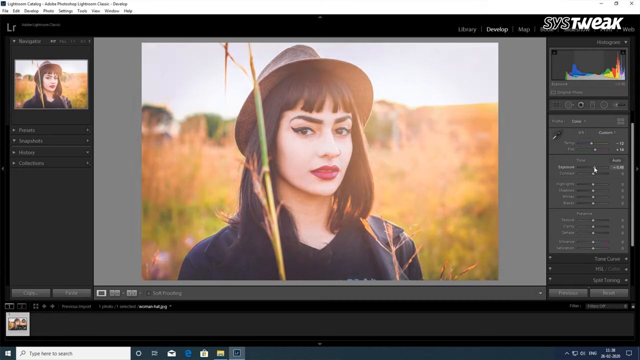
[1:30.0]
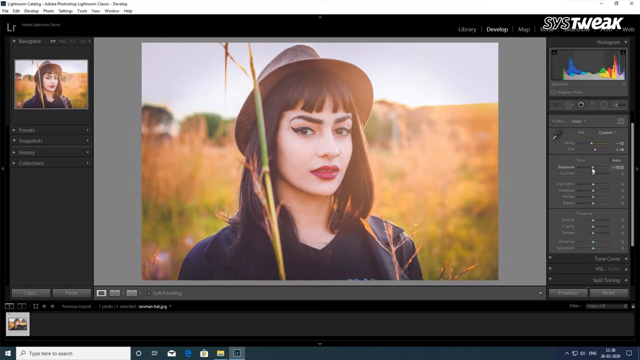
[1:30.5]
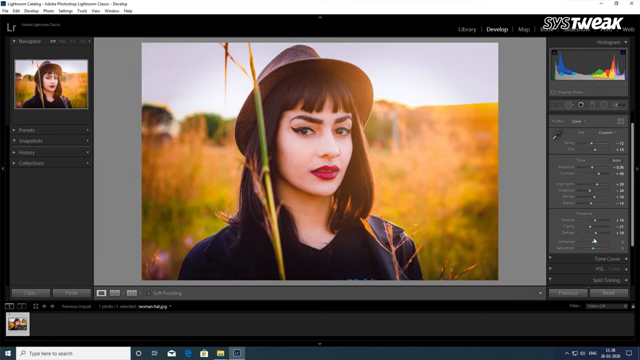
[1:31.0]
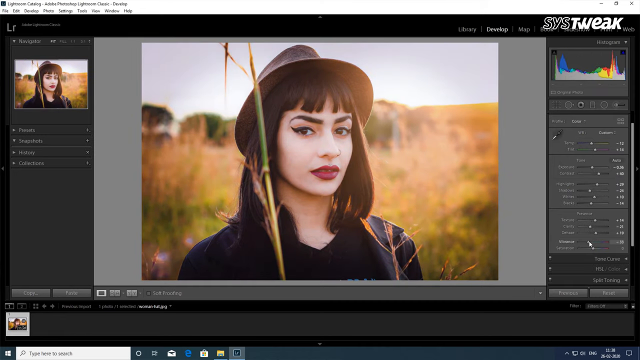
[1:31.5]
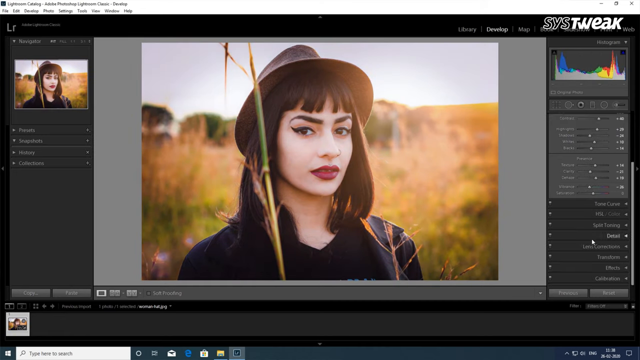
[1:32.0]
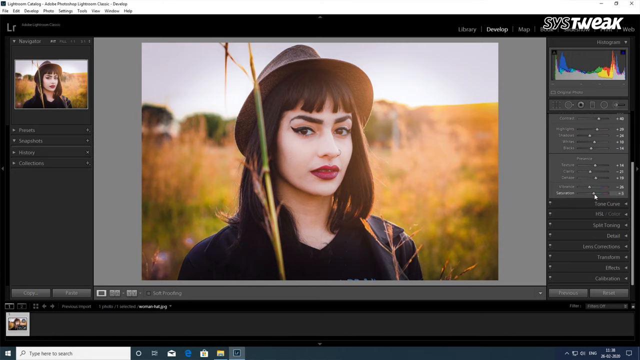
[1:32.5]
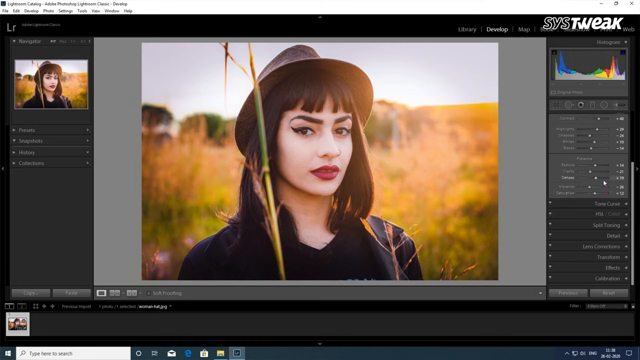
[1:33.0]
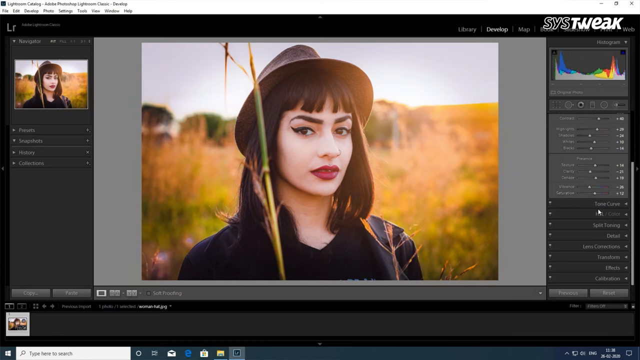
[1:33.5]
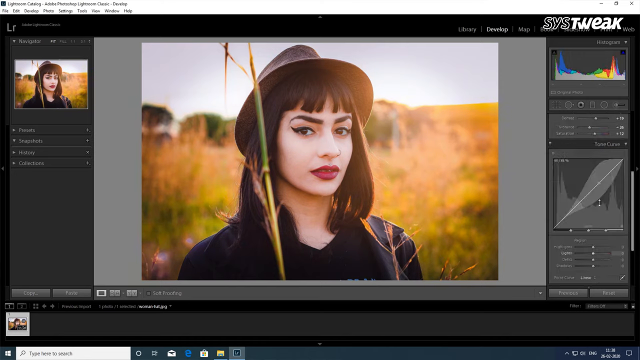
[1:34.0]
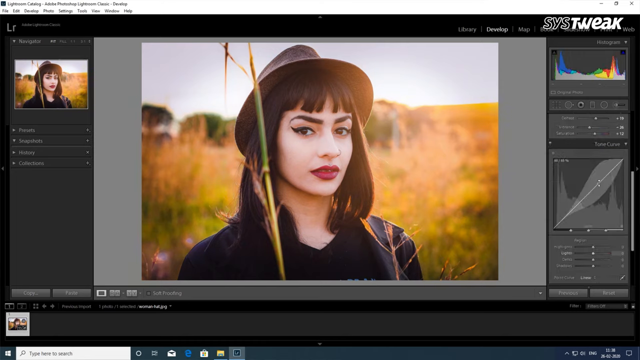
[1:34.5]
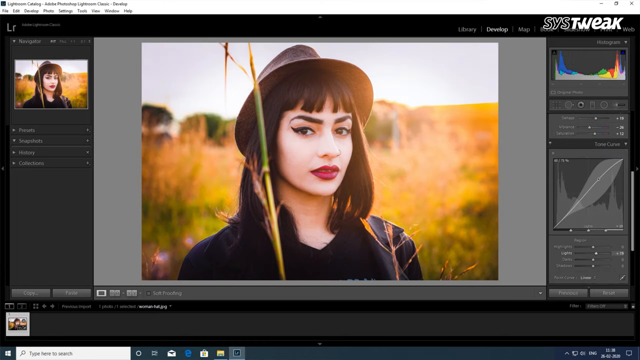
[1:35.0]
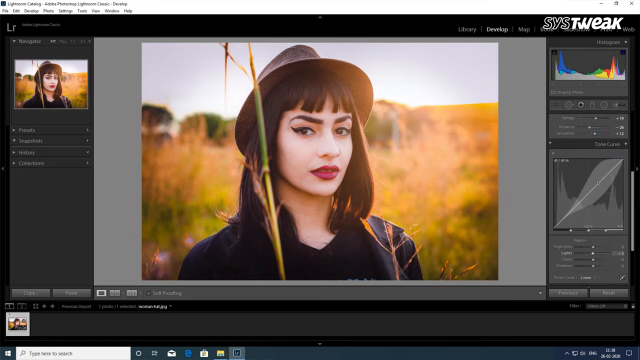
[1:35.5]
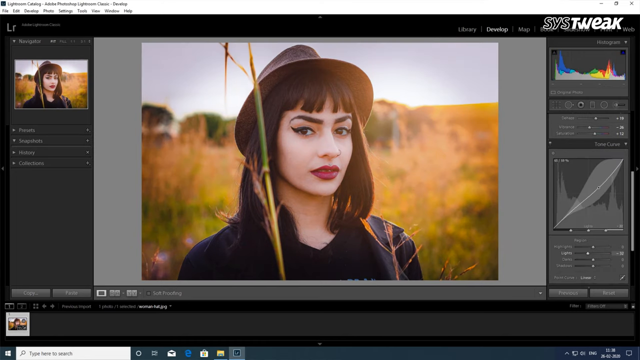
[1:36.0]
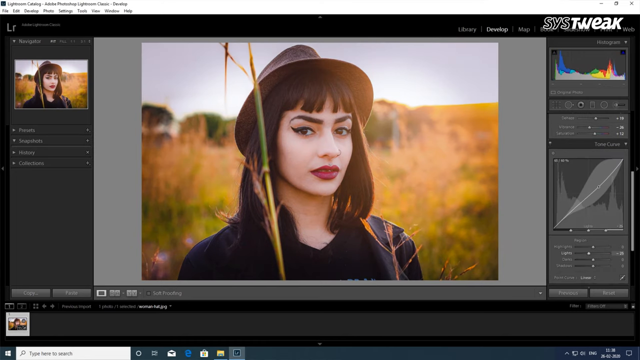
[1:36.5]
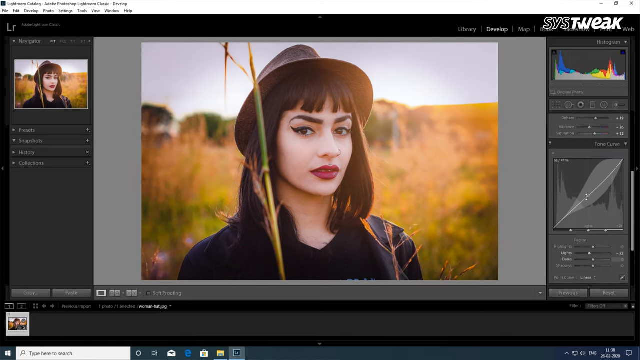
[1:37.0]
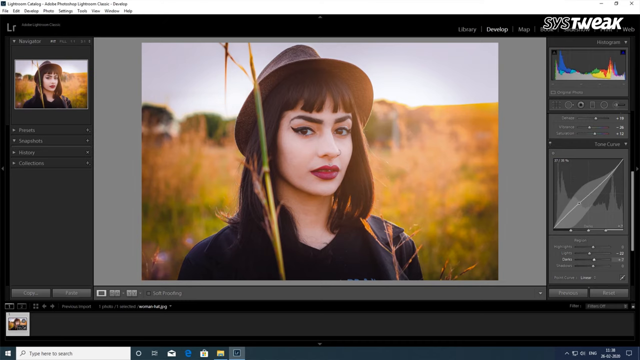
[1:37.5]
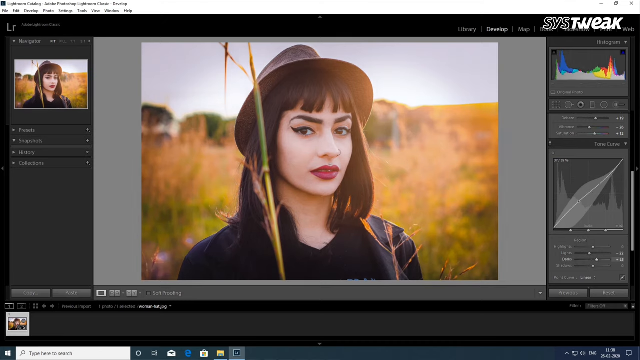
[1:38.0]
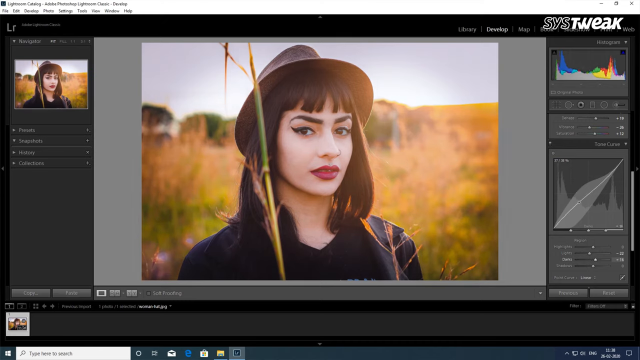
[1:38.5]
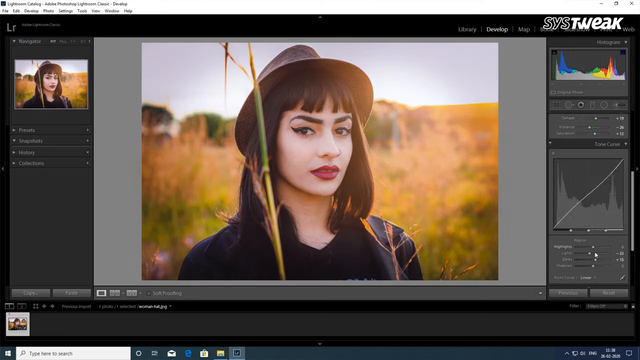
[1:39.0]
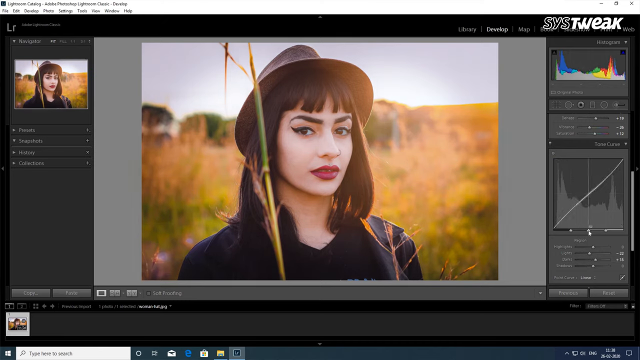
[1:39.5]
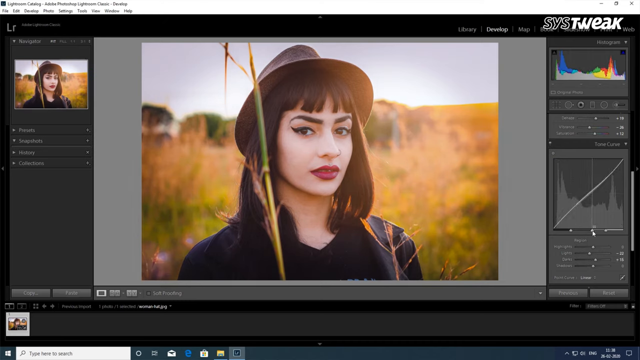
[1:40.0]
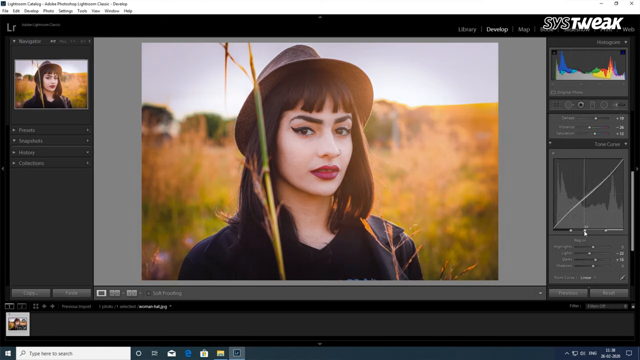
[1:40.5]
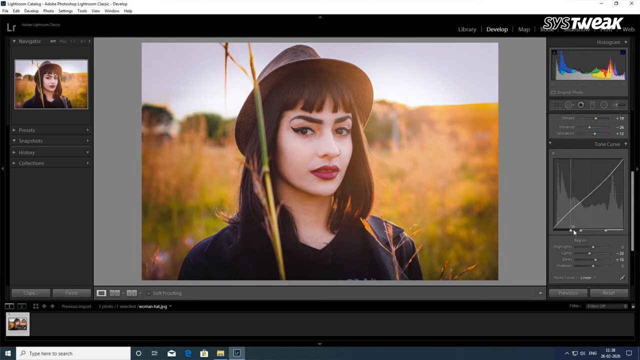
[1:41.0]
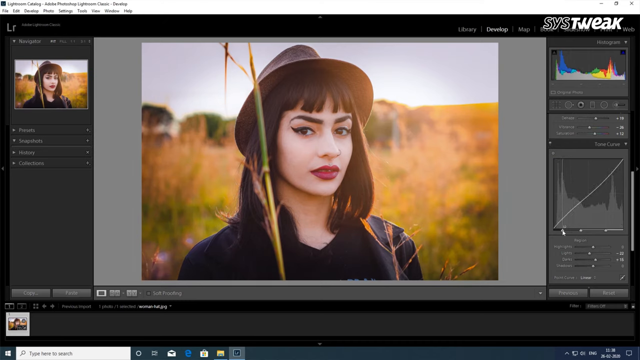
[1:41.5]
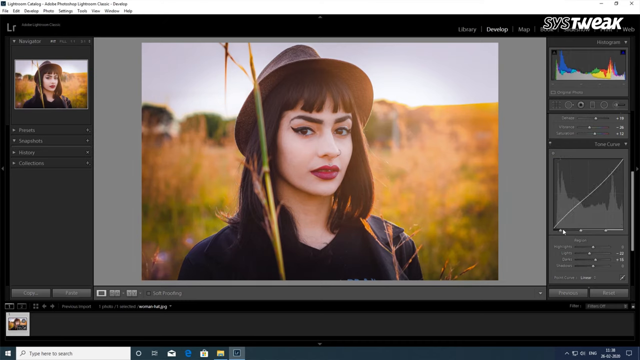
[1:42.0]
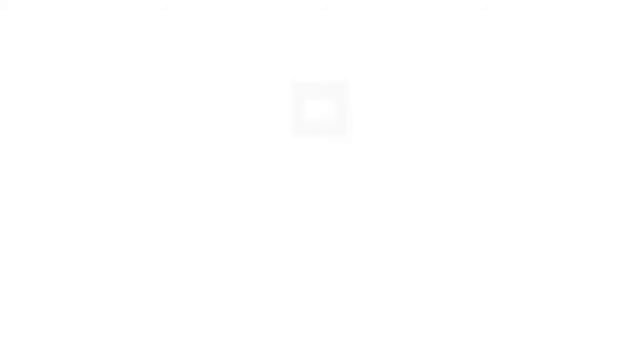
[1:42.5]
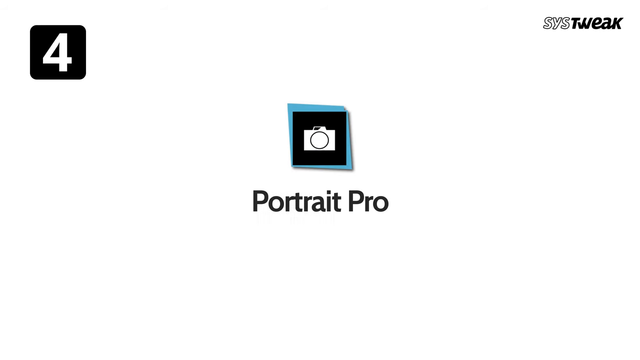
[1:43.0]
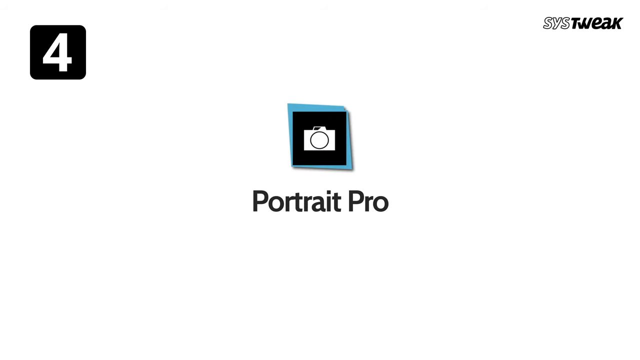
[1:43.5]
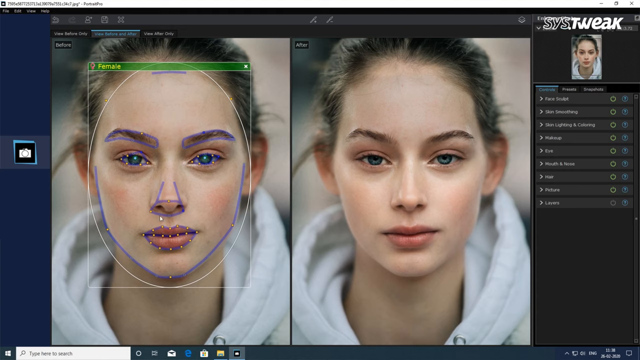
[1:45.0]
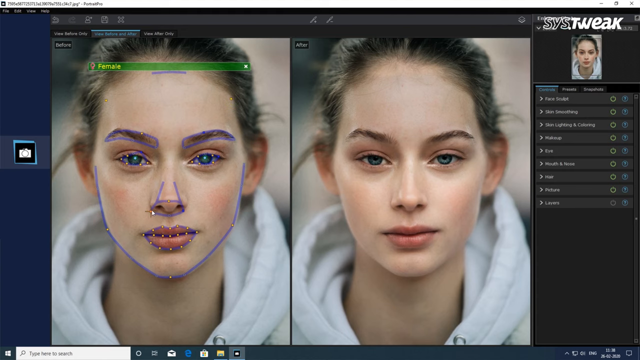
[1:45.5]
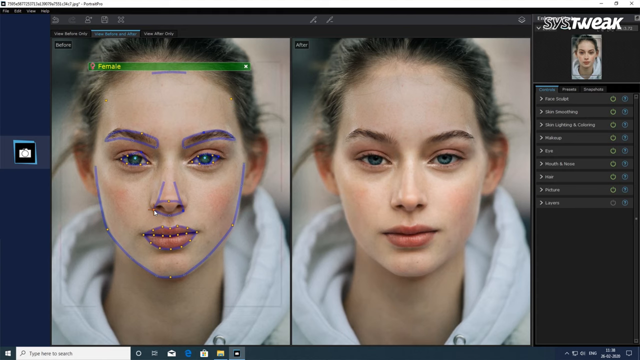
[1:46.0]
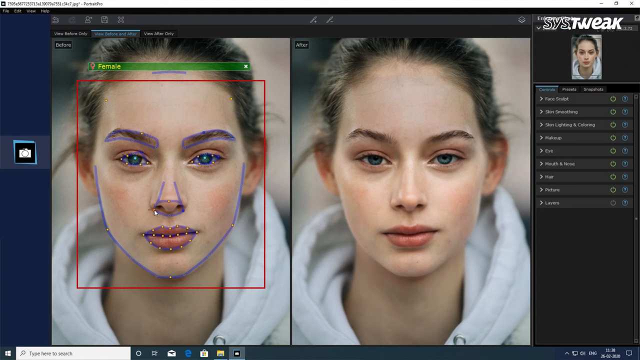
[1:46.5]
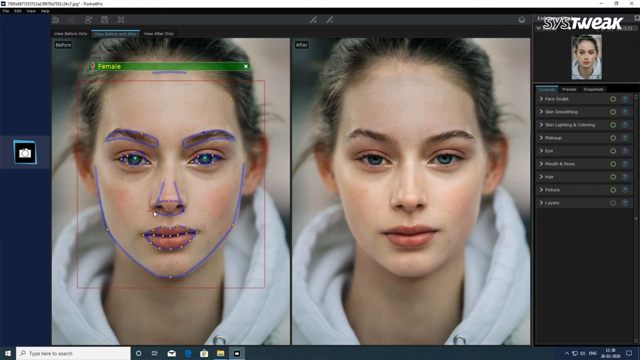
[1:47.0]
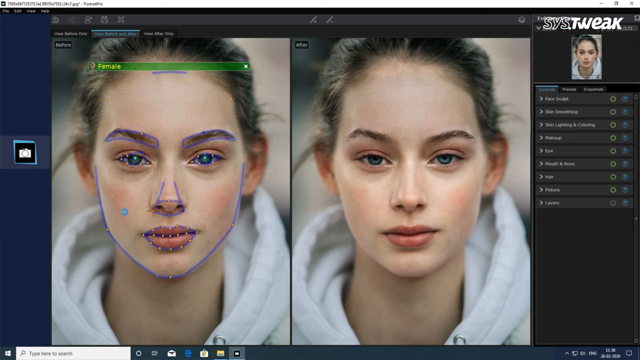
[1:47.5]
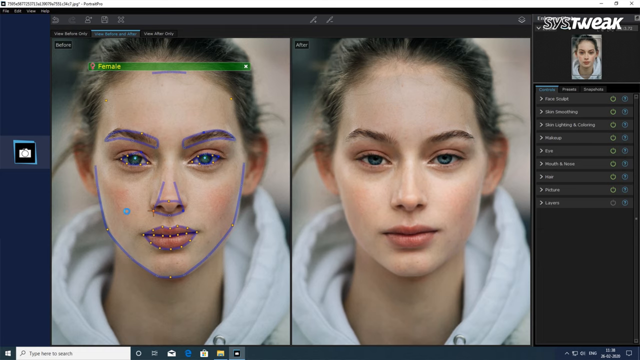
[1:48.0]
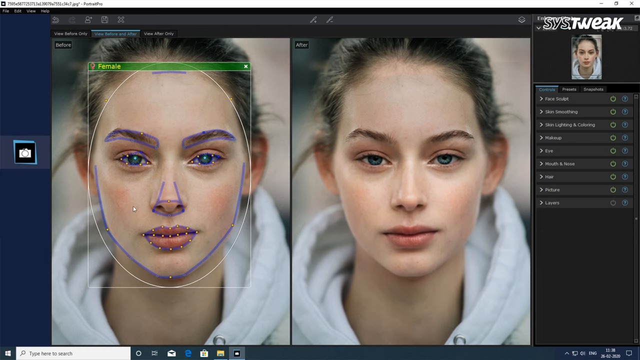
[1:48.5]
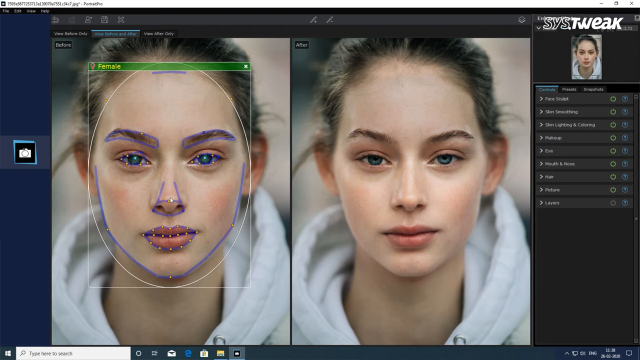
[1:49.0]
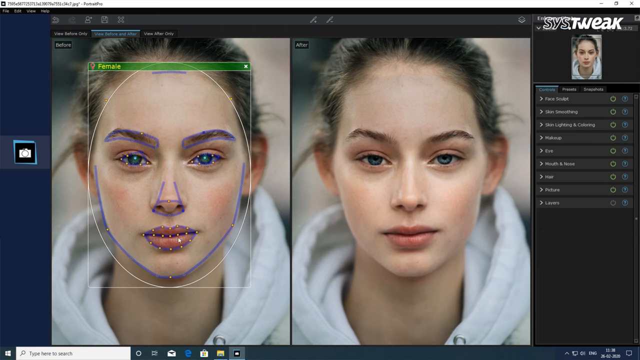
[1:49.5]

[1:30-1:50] A photo editing app is shown full screen. One large picture, front and center, shows a woman with makeup, a hat, a black shirt and red lipstick; the background of the image is a sunny day, and she appears to be standing in a field. Her image also appears at a smaller scale in the top left of the screen, and various editing options are to the far right of her image. The person operating the screen clicks on an item and begins toggling a button, moving certain categories one way or the other, and the picture brightens and also gets darker as the editing happens in real time. A new icon and logo then appears that states "Portrait Pro." Next is an image of a girl in a hoodie sweatshirt, with an unmarked version on the right and a marked-up version on the left of the screen. The marked-up version has her chin, lips, nose, eyes and eyebrows outlined, and the person operating the computer is editing those features.